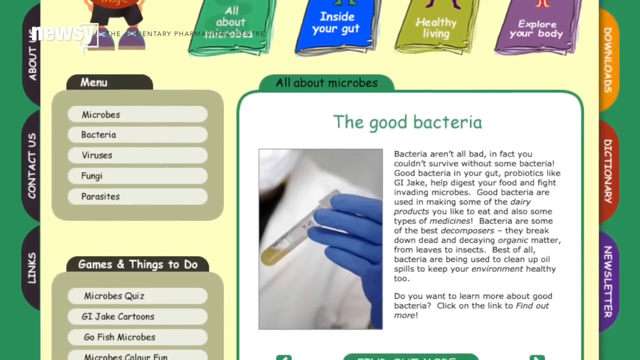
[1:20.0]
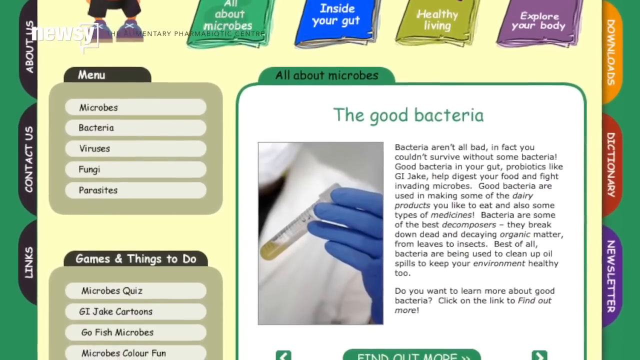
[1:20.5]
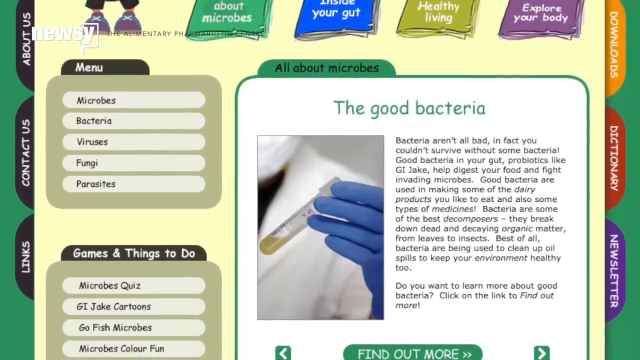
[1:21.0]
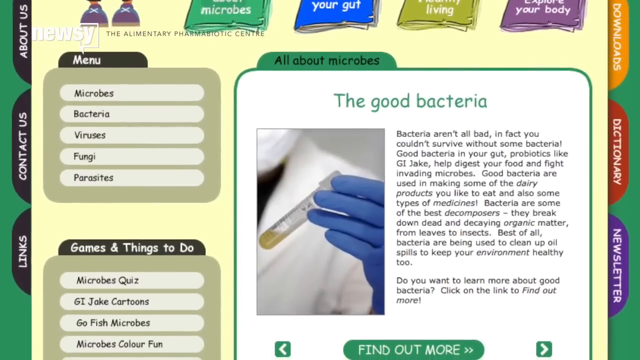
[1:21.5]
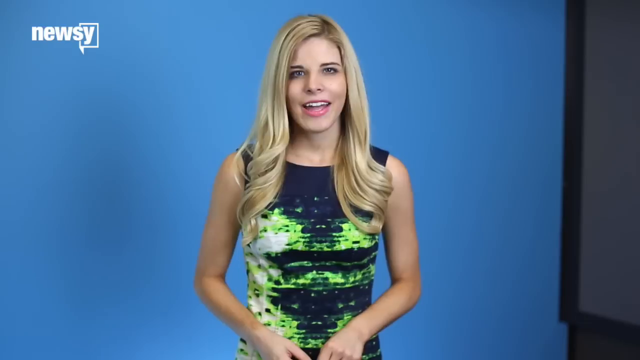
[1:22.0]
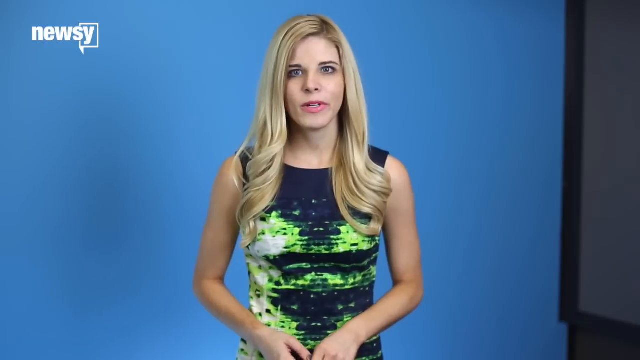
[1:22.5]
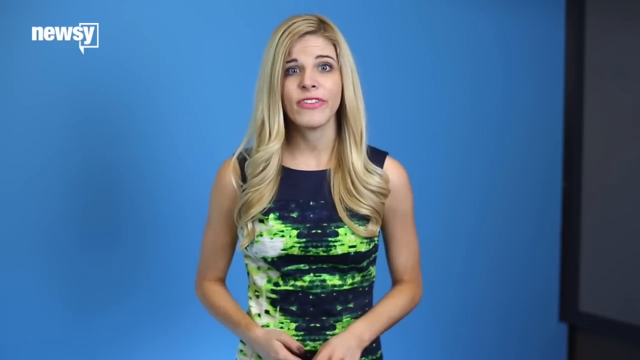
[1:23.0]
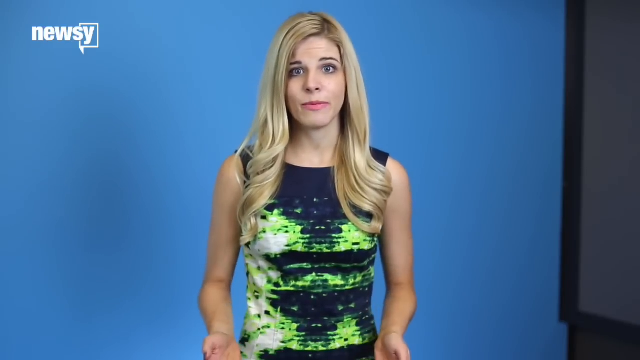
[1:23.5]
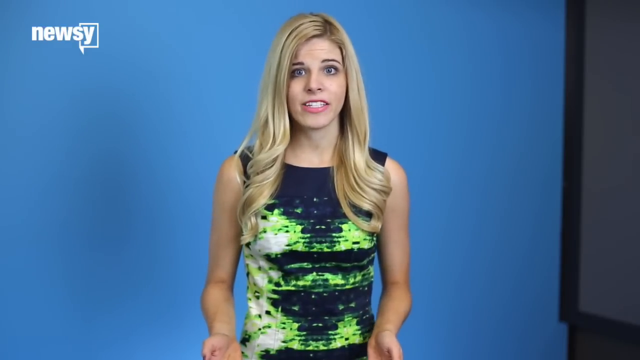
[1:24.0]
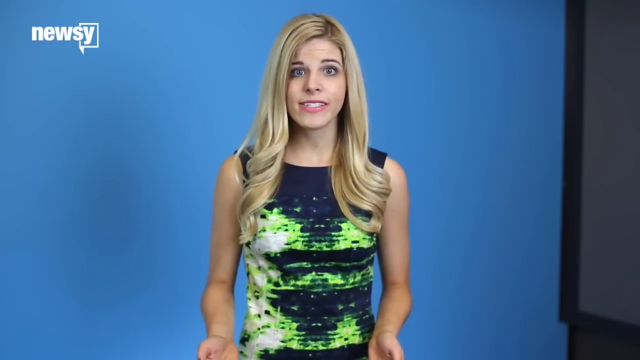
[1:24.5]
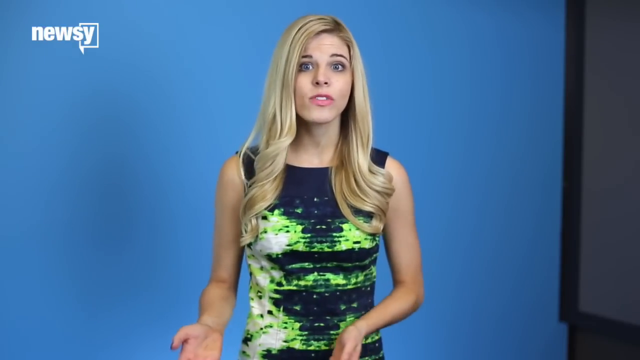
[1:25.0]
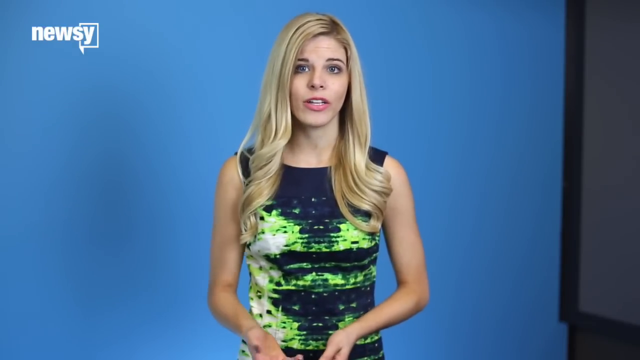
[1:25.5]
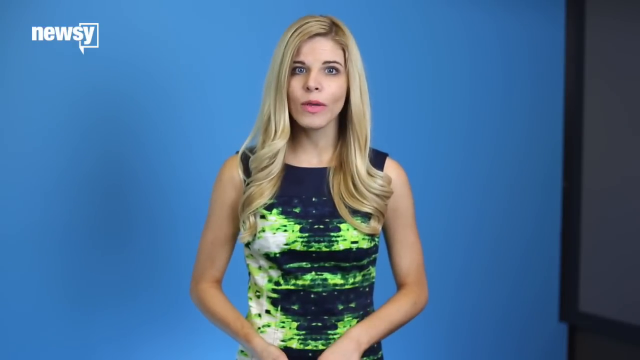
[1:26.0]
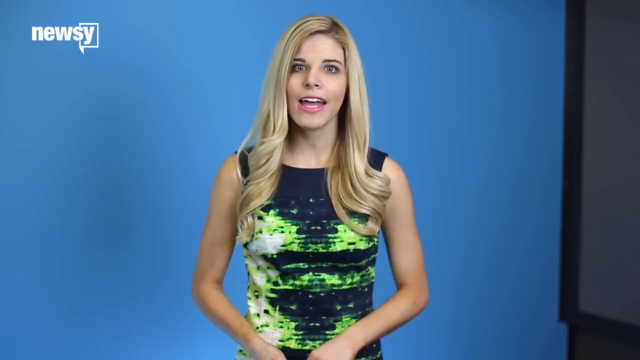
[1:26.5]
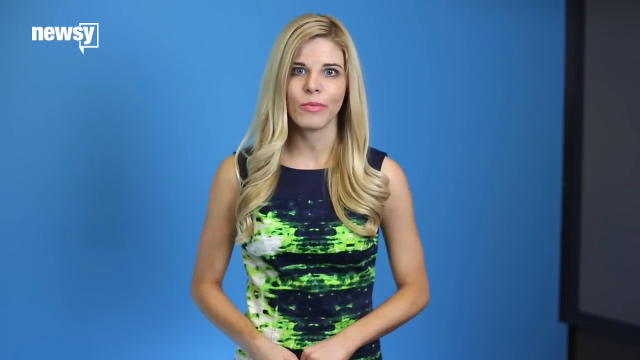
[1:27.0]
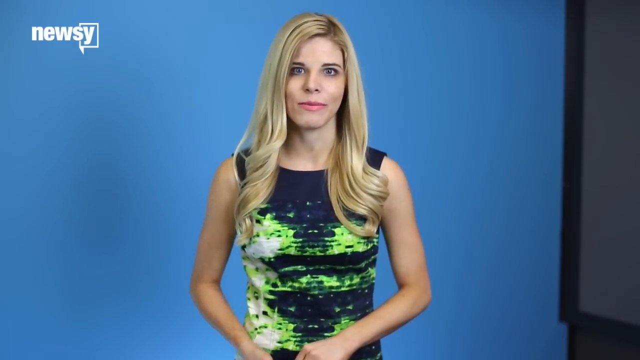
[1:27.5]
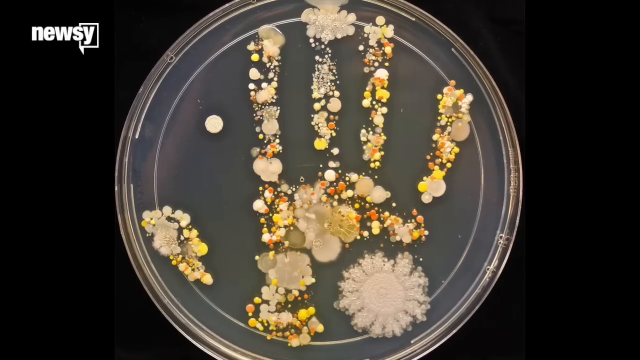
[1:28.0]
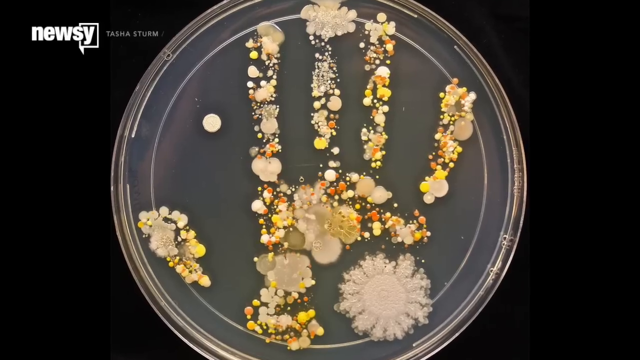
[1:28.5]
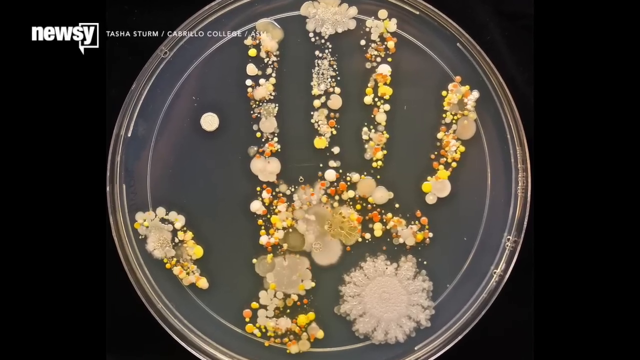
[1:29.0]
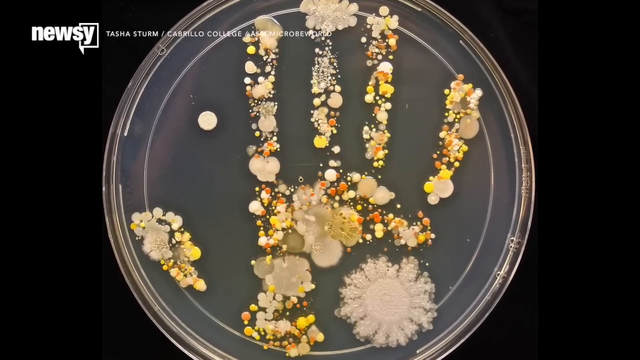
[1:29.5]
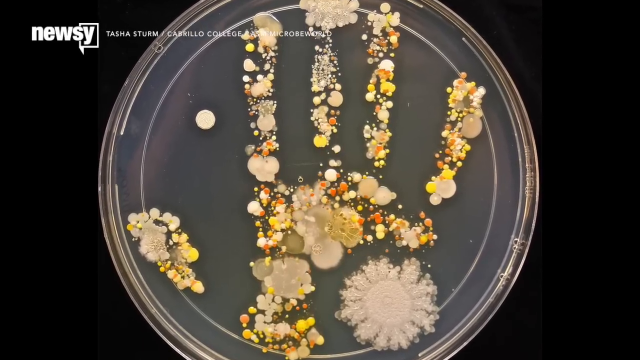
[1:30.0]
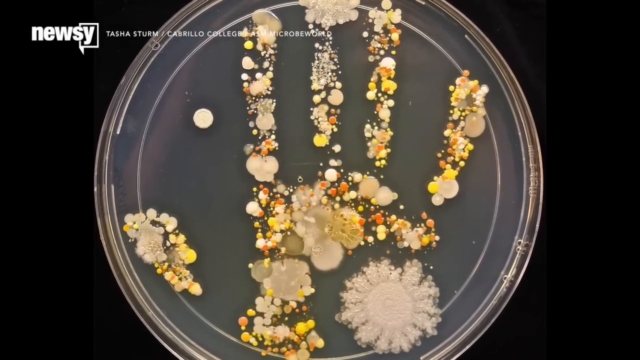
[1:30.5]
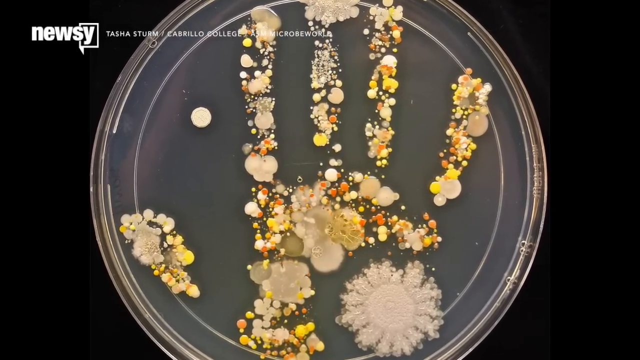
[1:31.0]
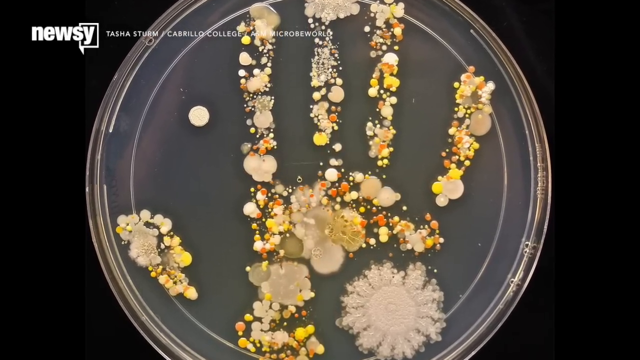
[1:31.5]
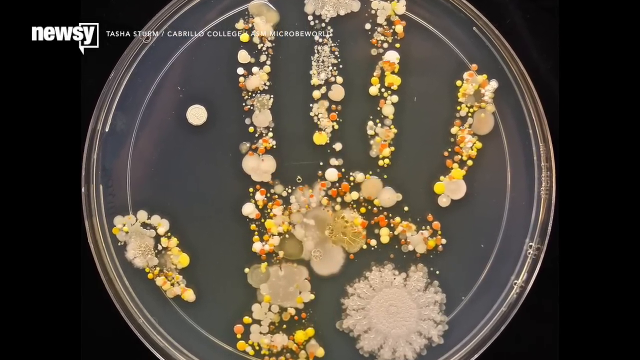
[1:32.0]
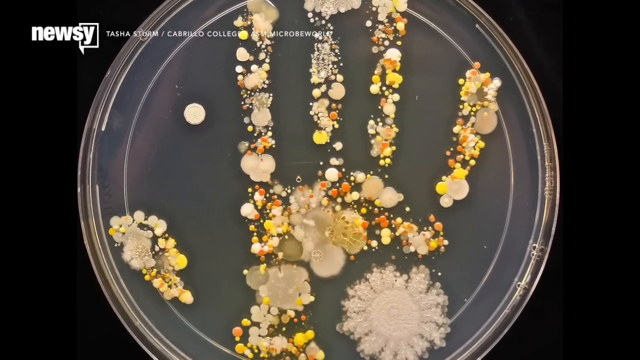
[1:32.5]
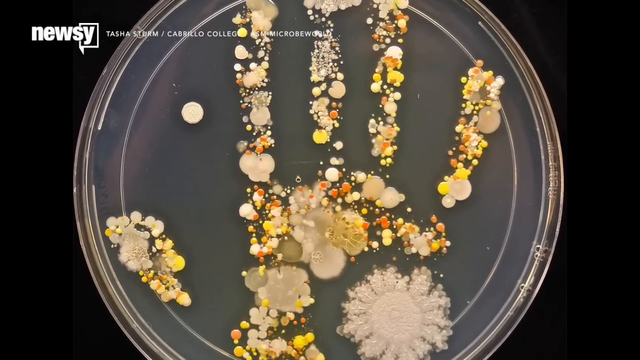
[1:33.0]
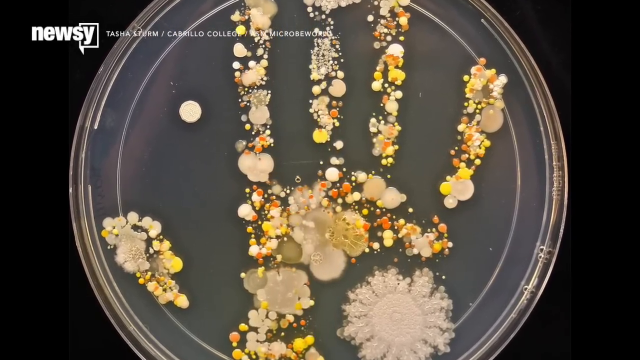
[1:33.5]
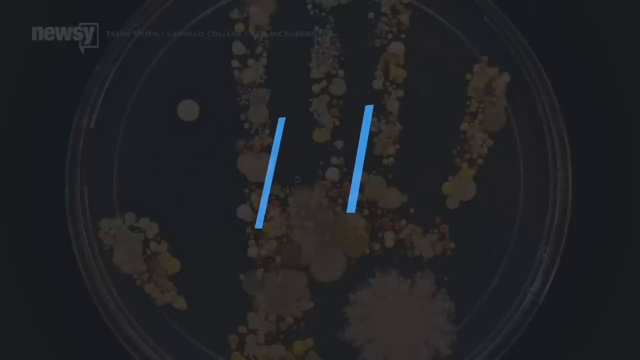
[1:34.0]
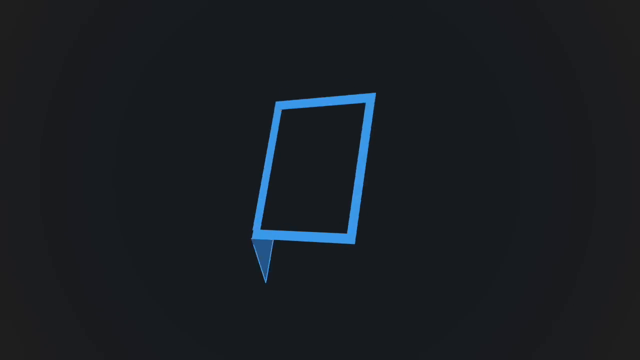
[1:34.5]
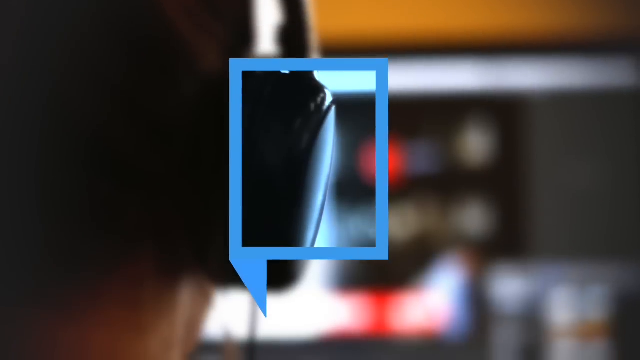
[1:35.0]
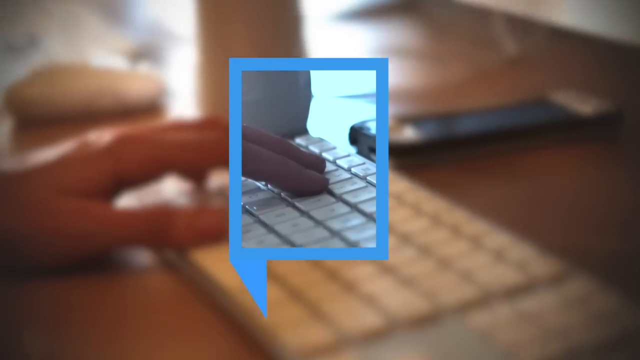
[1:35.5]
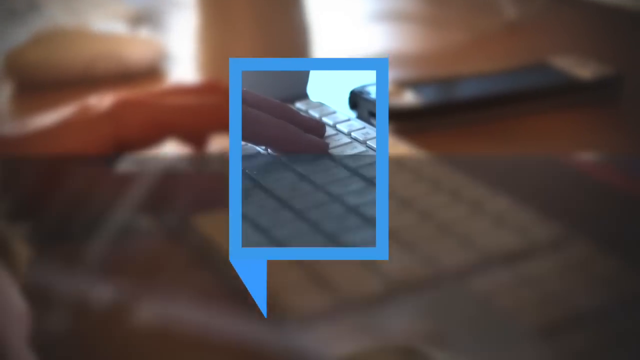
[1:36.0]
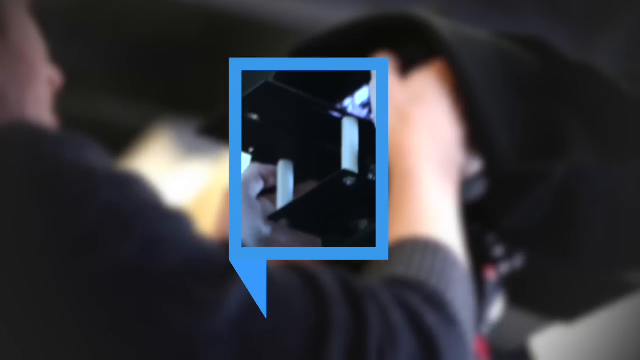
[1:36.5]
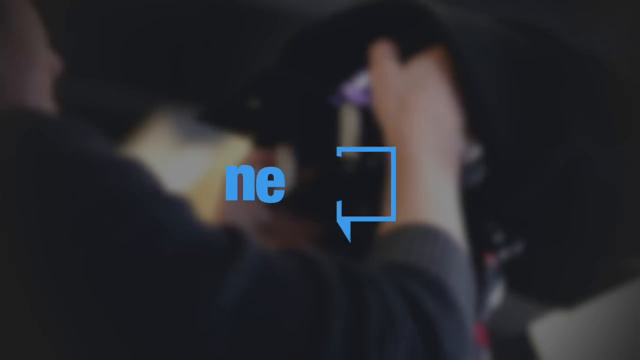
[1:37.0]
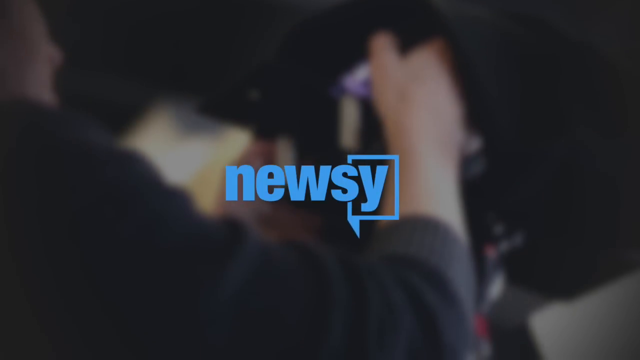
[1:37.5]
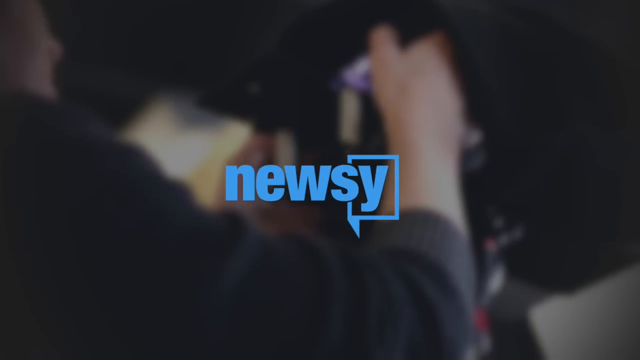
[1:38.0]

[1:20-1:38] A section of a child's magazine or book headed "The Good Bacteria" shows the blue glove with the yellow test tube. It states: "In fact, you couldn't survive without good bacteria. Good bacteria in your gut, probiotics like G.I. Jake, help digest your food and fight invading microbes. Good bacteria are used in making some of the dairy products you like to eat and also some types of medicines. Bacteria are some of the best decomposers. They break down dead and decaying organic matter from leaves to insects. Best of all, bacteria are used to clean up oil spills to keep your environment healthy too." The shot then cuts back to Katherine in the studio as she talks to the camera, moving her hands from the side and then together. The Petri dish with the mould spore handprint follows, showing blues, reds, whites and greys. Then a close-up of a person's hand with a laptop appears, along with a steering wheel and the blue Newsy logo.